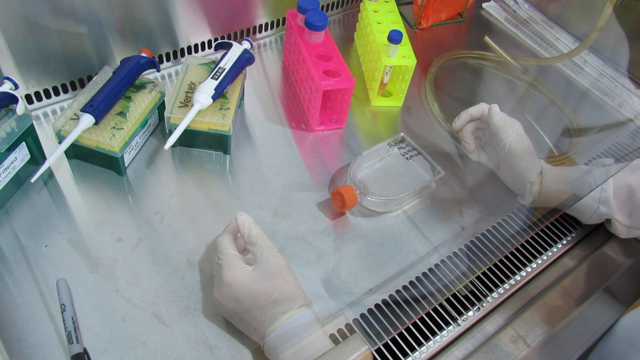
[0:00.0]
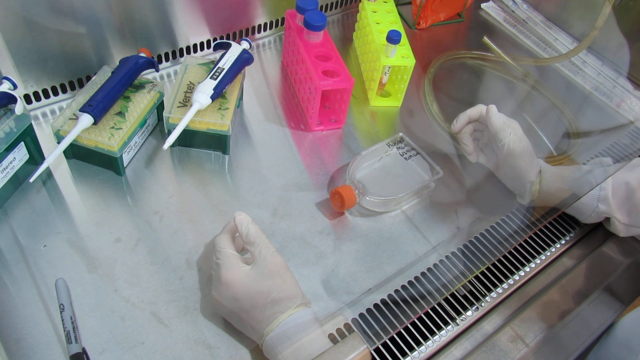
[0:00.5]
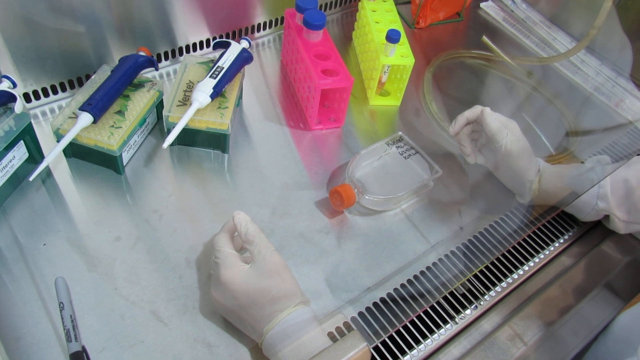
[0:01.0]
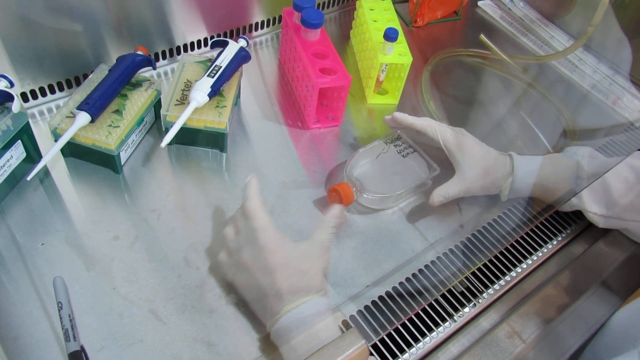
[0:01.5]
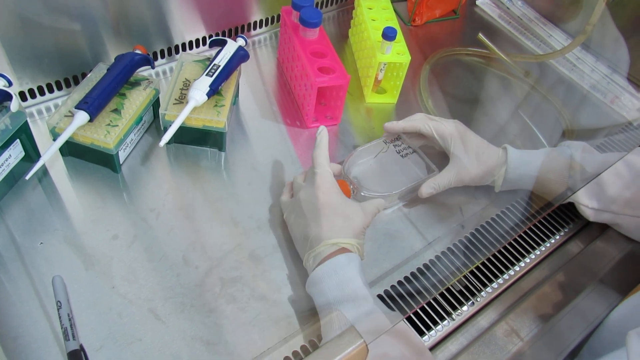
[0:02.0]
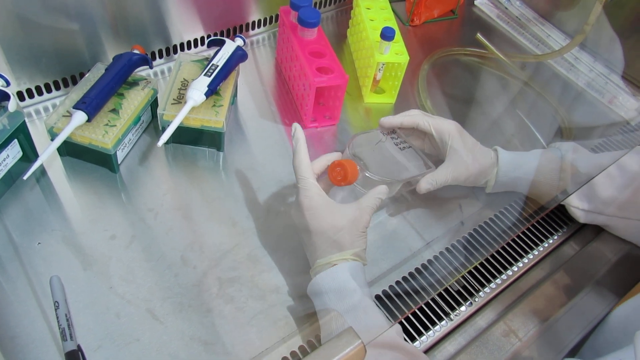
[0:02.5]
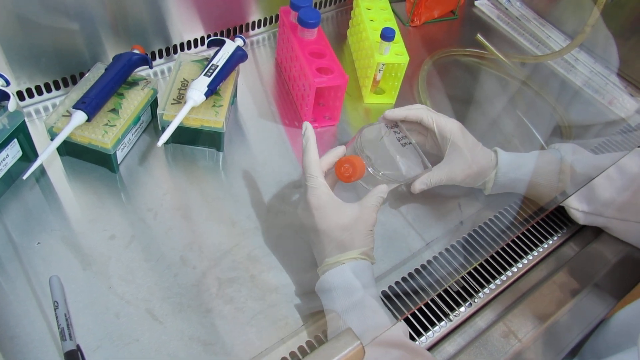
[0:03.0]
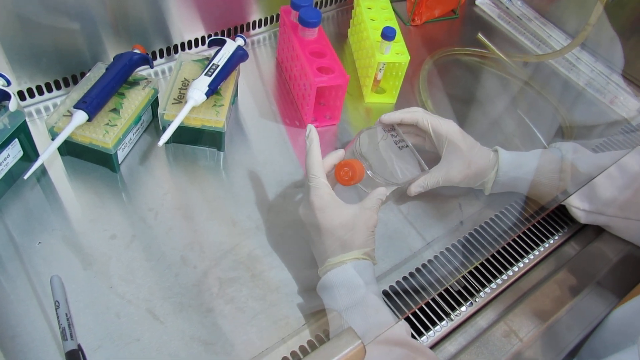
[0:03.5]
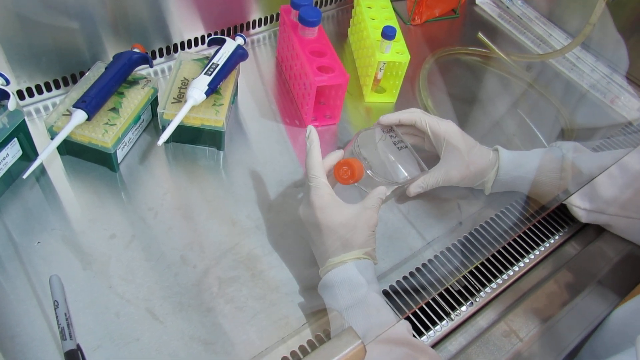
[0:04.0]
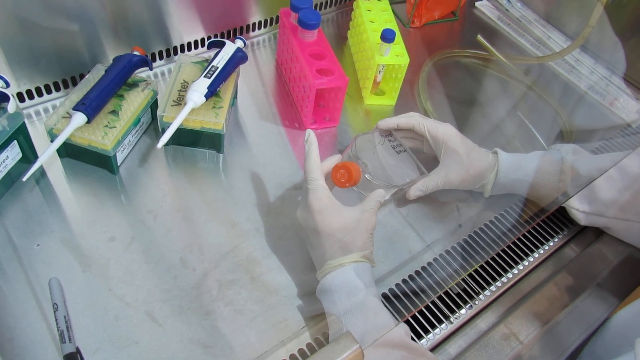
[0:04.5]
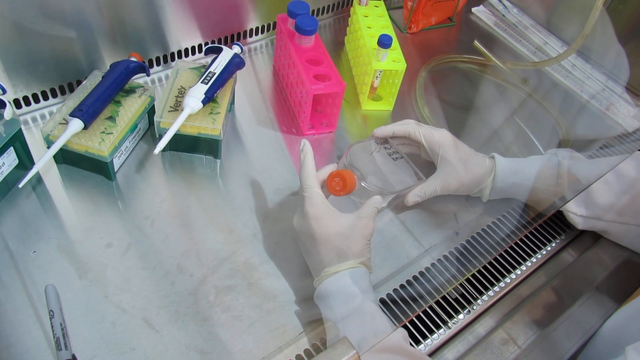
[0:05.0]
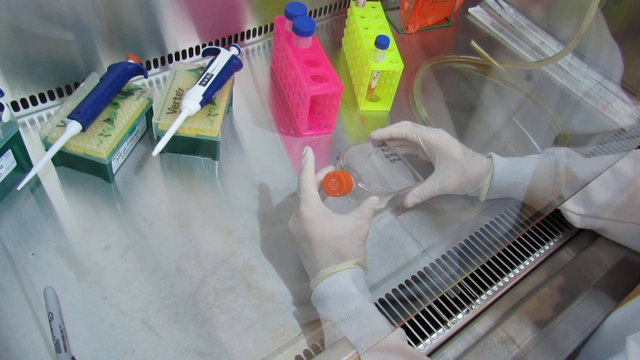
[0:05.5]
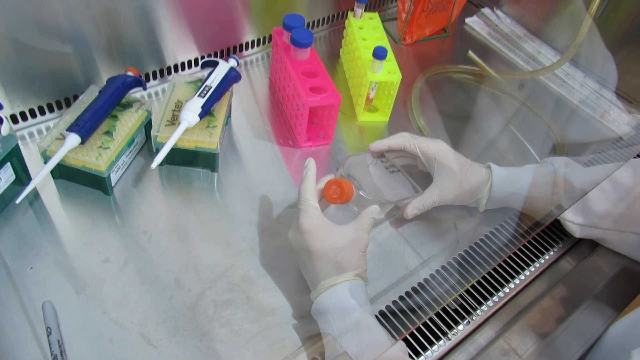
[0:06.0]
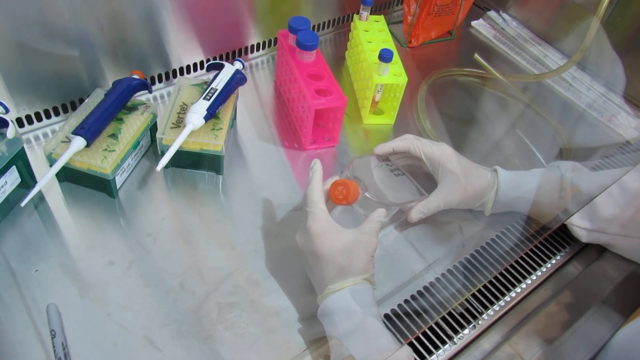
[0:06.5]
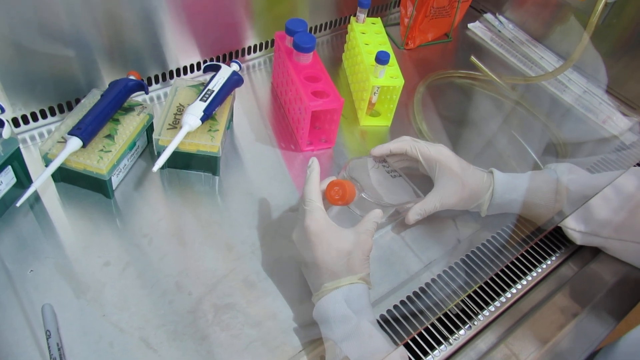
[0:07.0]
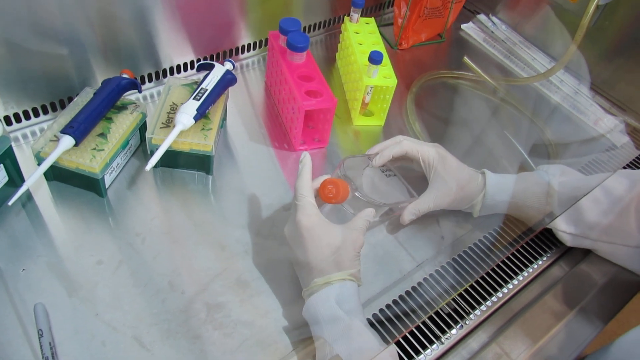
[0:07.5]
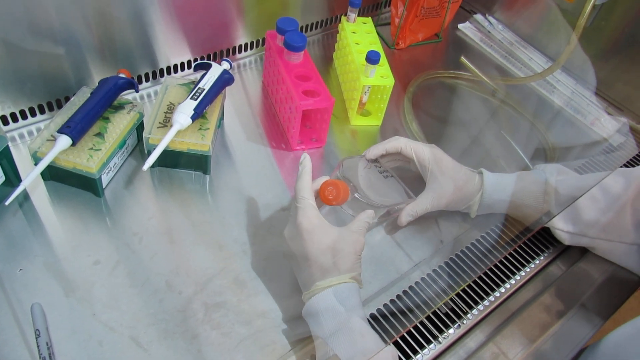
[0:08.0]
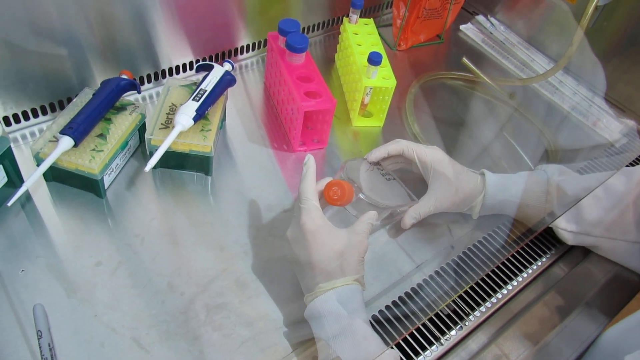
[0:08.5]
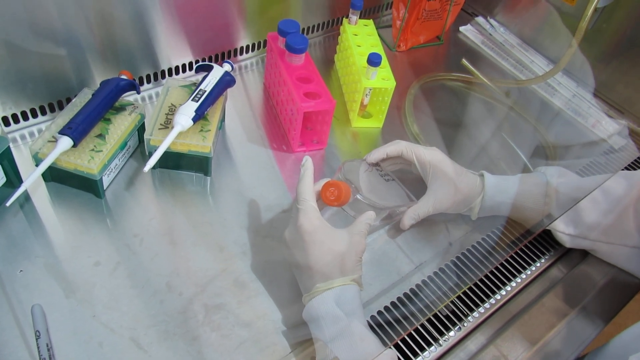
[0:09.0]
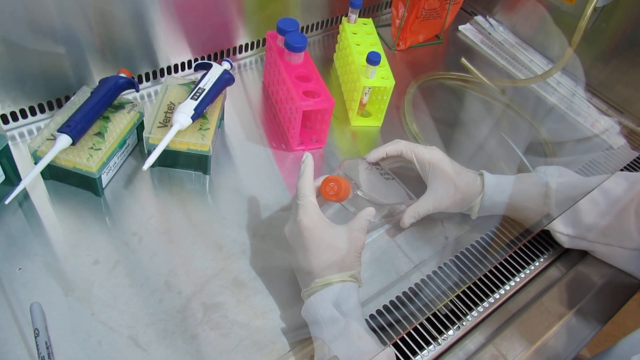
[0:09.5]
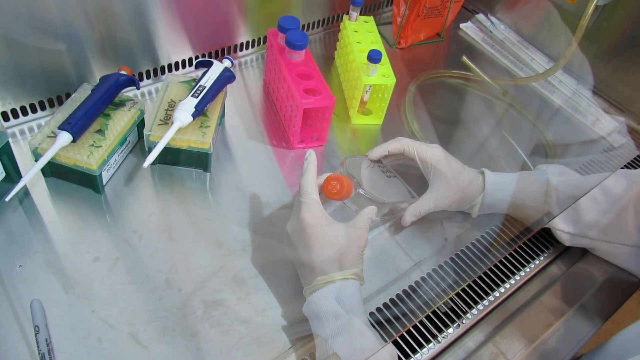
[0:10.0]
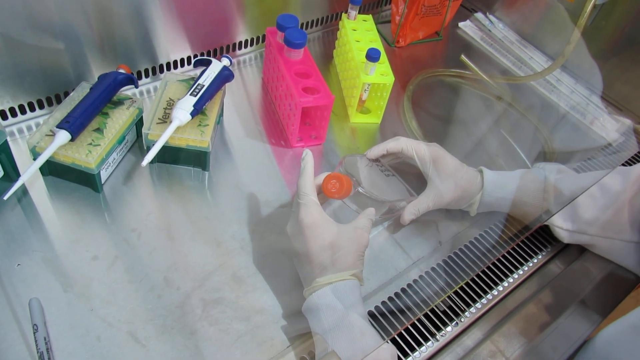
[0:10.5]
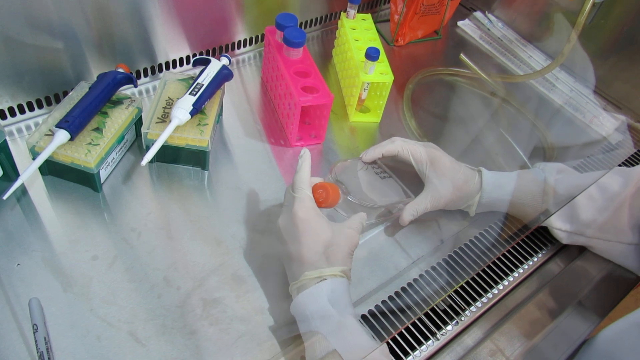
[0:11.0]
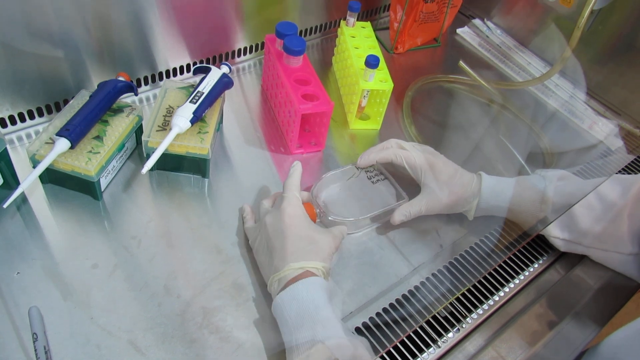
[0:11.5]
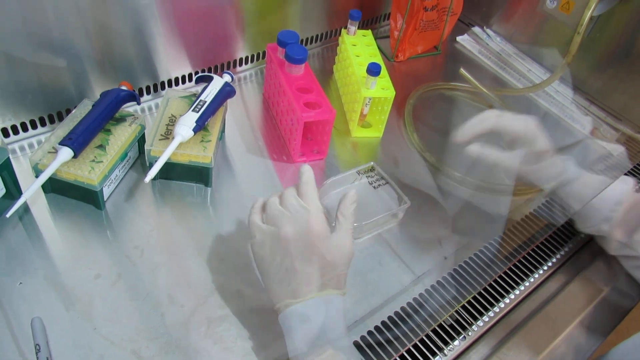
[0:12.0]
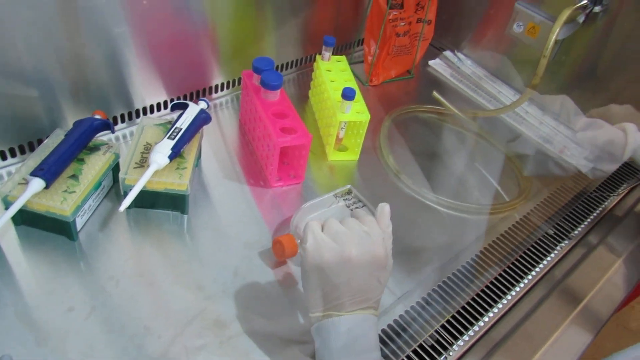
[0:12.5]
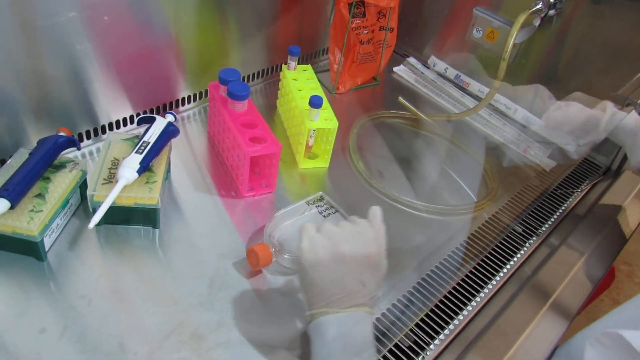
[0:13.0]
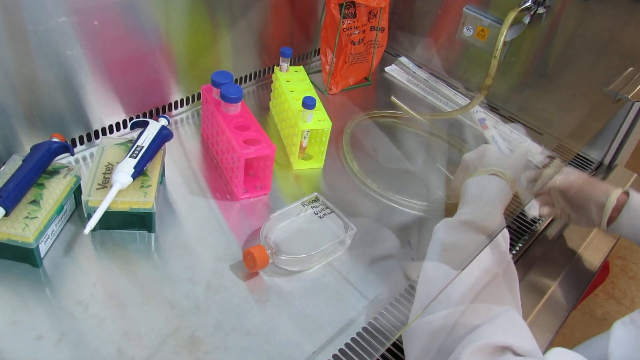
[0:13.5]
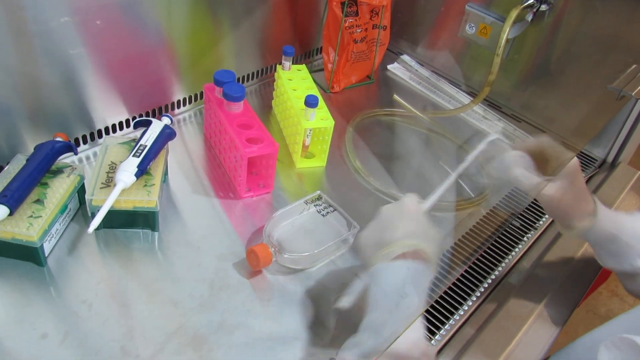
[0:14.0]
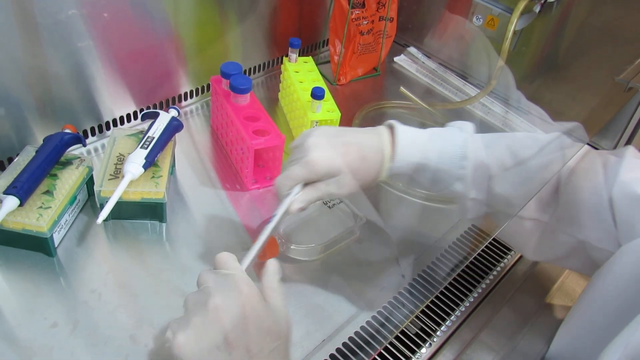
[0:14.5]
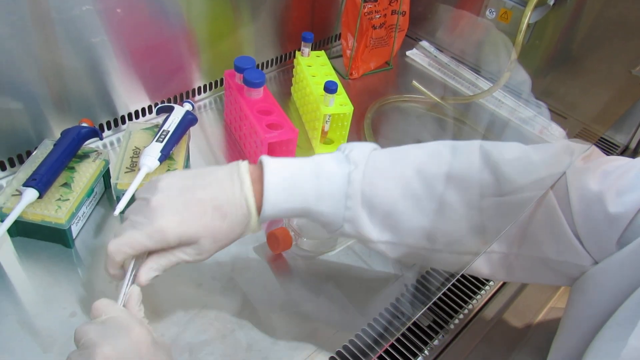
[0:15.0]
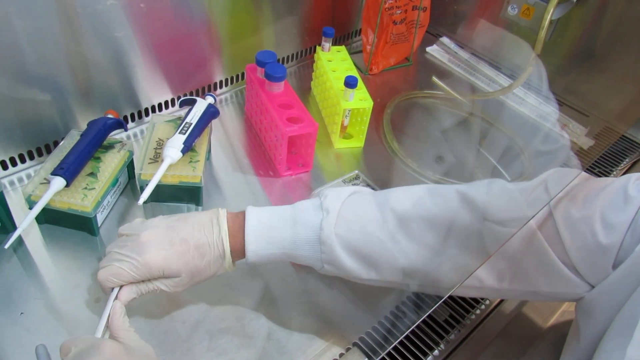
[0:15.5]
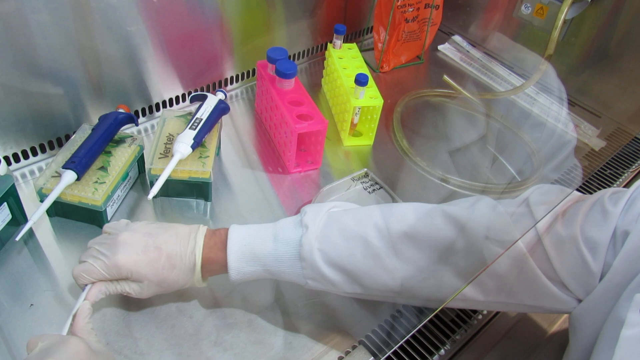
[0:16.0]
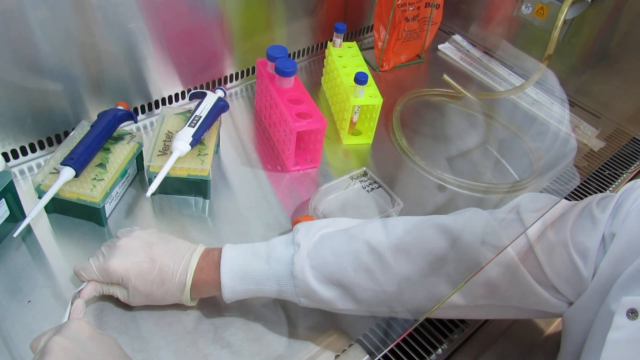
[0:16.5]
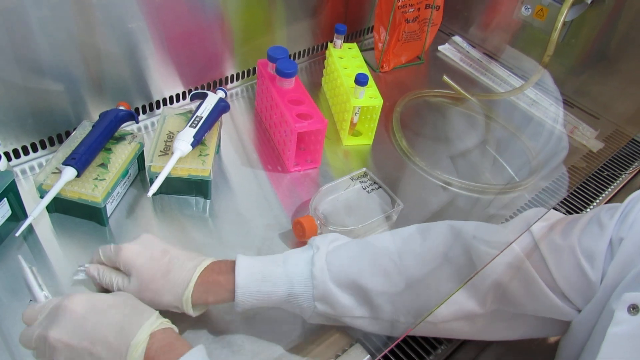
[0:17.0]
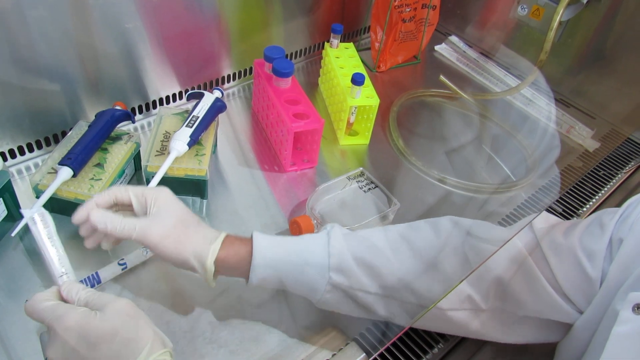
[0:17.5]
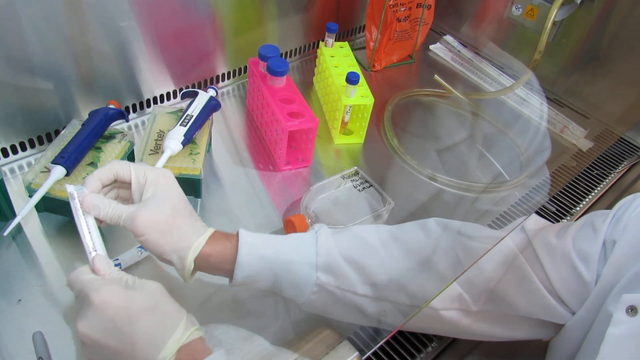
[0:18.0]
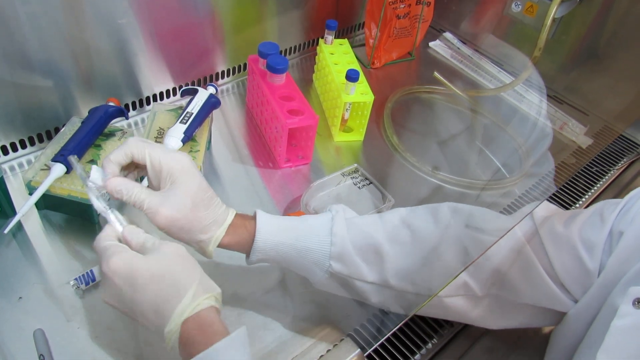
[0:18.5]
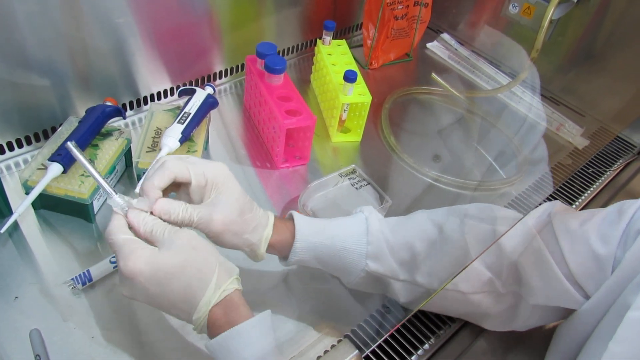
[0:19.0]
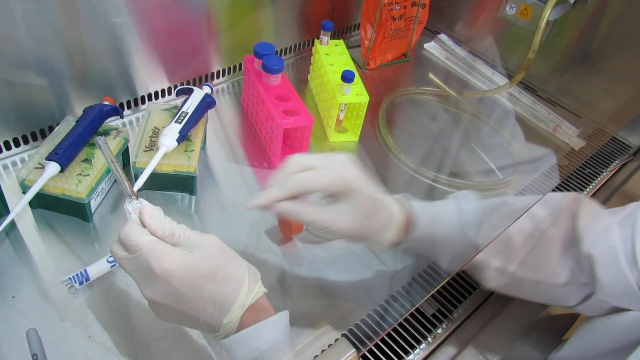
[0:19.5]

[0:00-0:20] The setting looks like a lab. A person's hands in white gloves are visible, along with the sleeve of a white lab coat. There is a clear bottle with an orange lid; the person picks it up and looks at it, tilting it upward at a slant. Then they appear to snap something open, possibly a pipette. Test tubes with blue lids are in what seems to be a pink test tube holder, and a greenish yellow test tube holder has one tube in it. There also appear to be three small pipettes for measuring, apparently microliters, all blue and white, resting on a container that is clear at the top and green at the bottom.